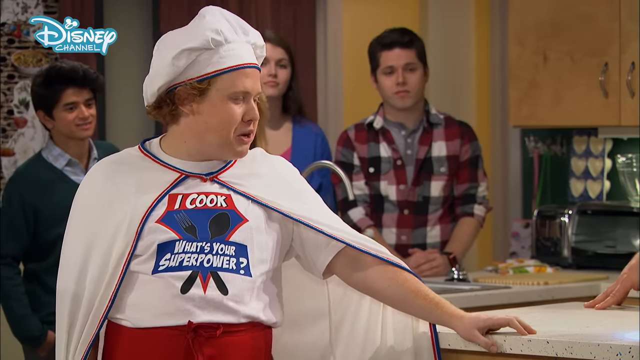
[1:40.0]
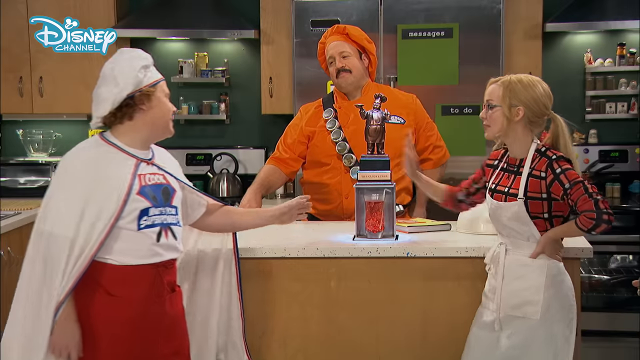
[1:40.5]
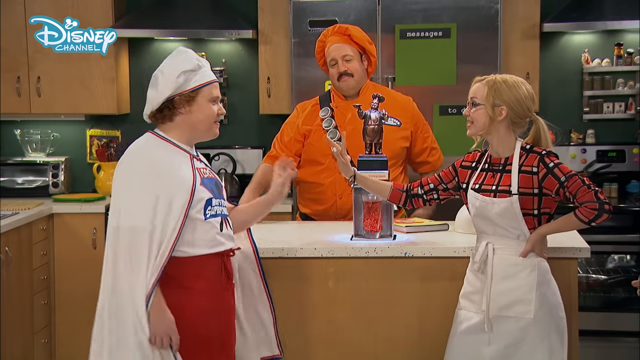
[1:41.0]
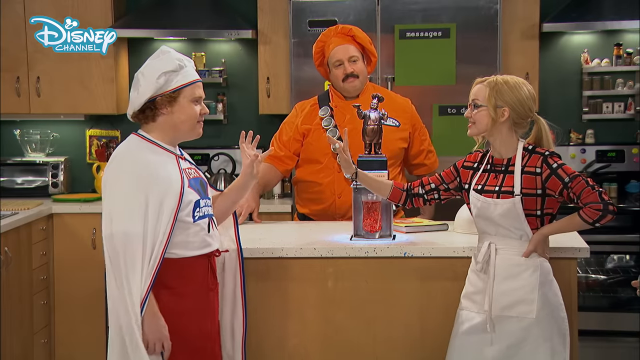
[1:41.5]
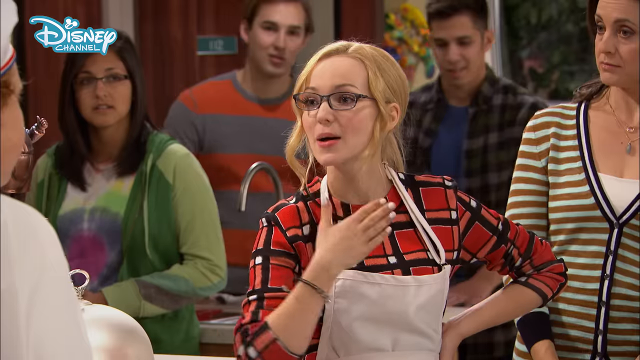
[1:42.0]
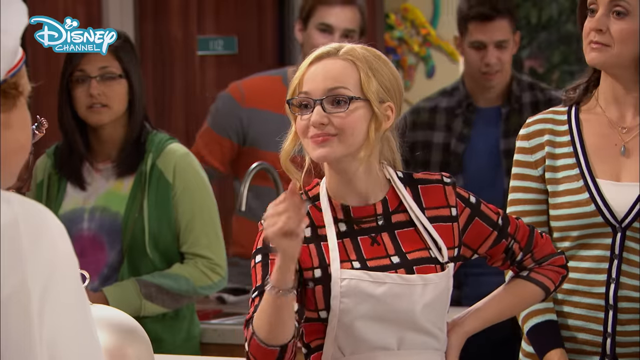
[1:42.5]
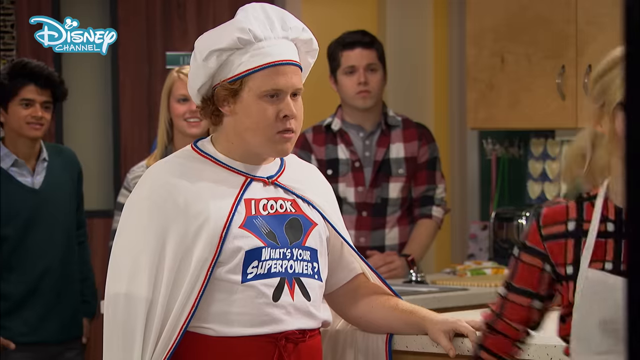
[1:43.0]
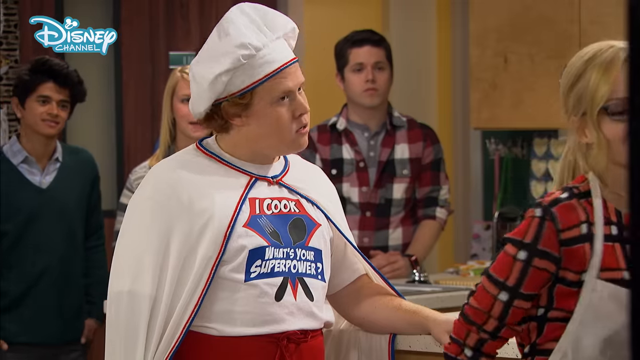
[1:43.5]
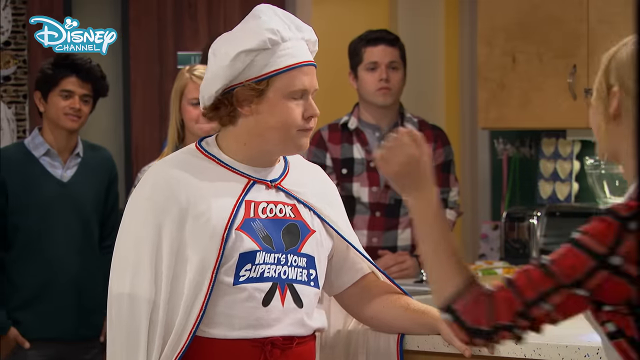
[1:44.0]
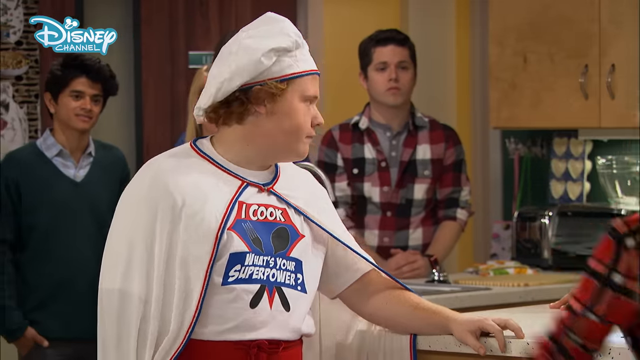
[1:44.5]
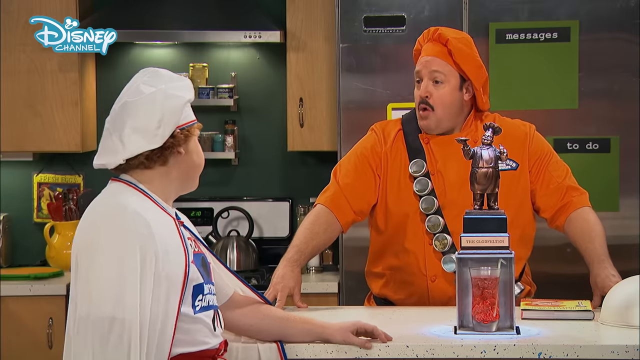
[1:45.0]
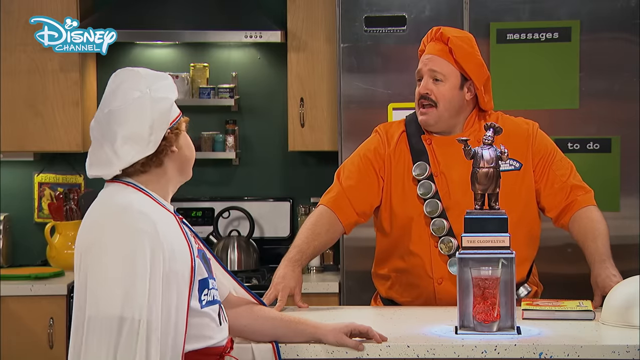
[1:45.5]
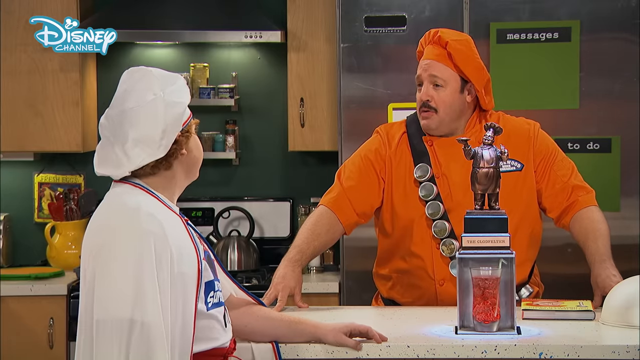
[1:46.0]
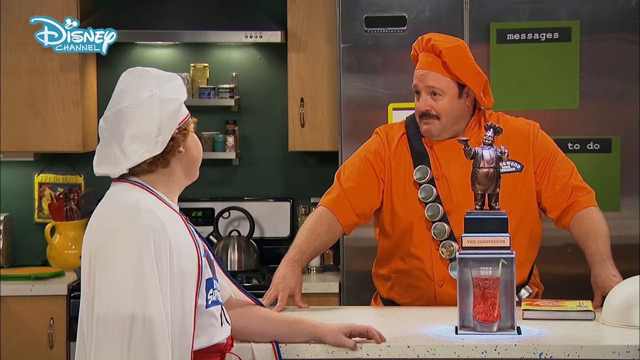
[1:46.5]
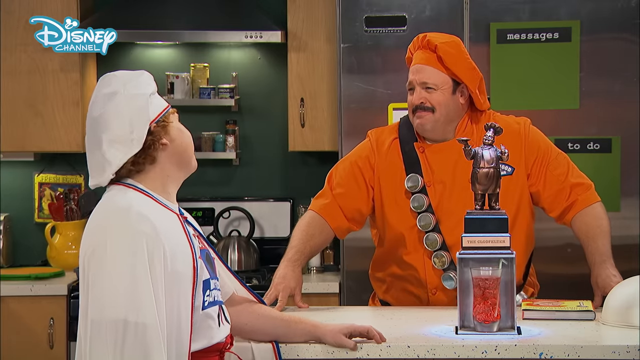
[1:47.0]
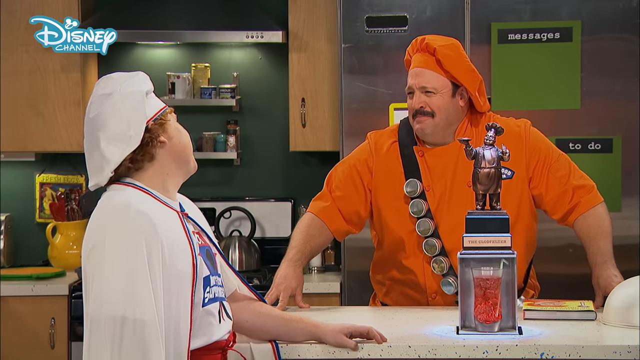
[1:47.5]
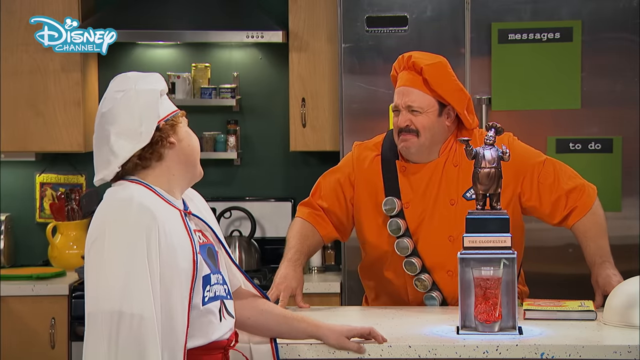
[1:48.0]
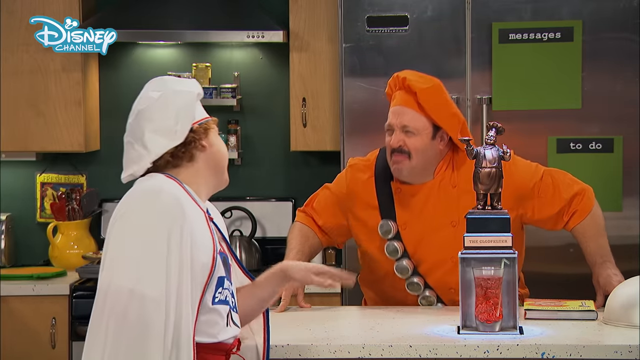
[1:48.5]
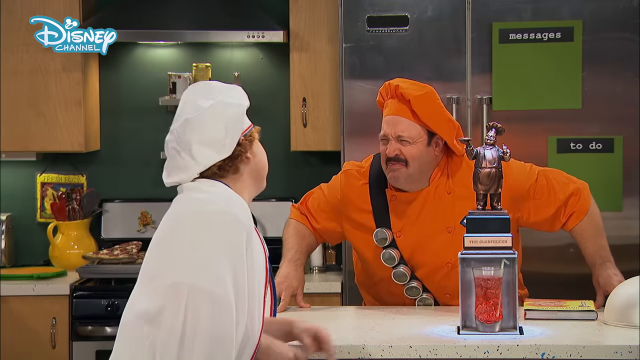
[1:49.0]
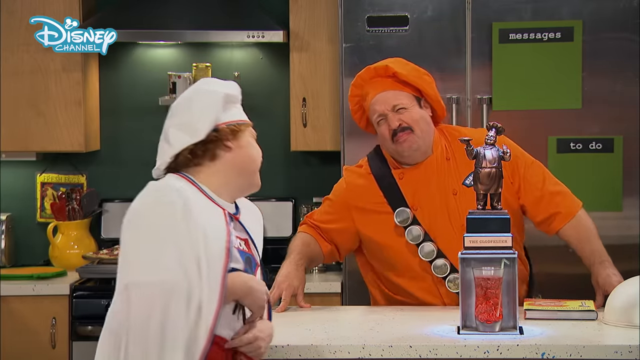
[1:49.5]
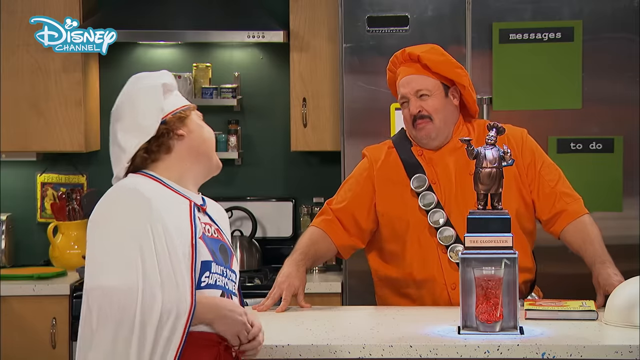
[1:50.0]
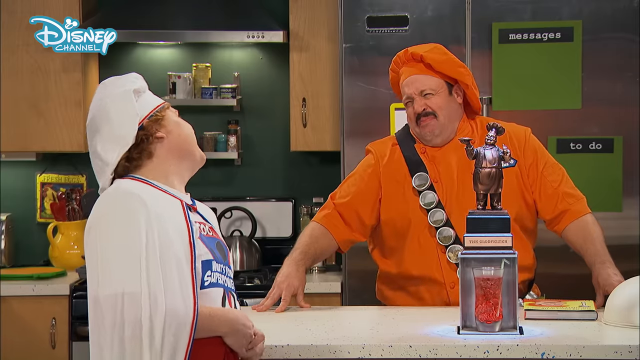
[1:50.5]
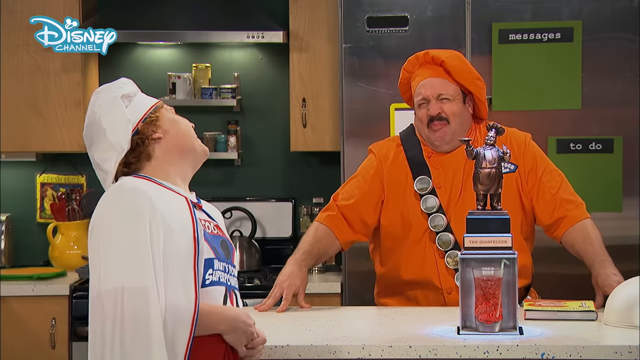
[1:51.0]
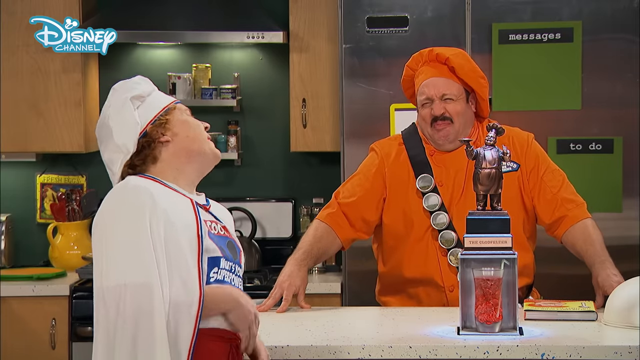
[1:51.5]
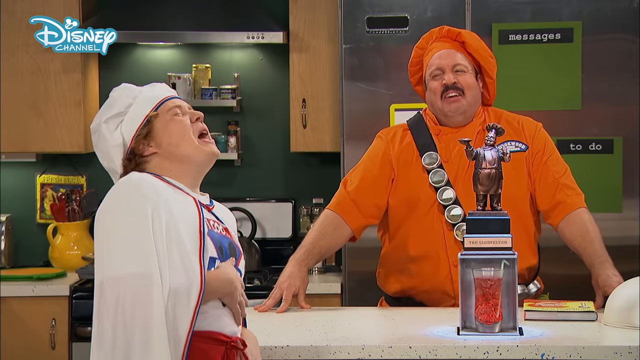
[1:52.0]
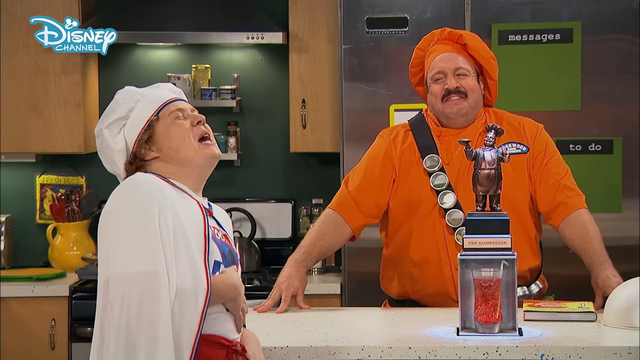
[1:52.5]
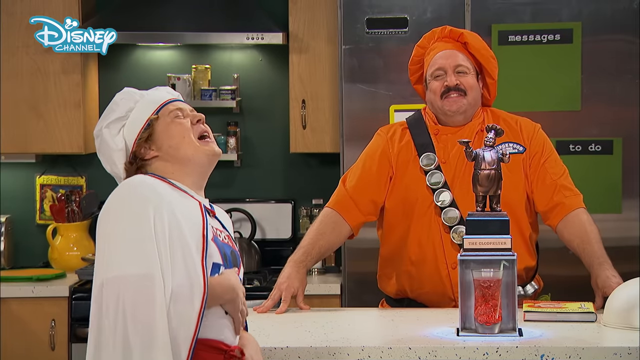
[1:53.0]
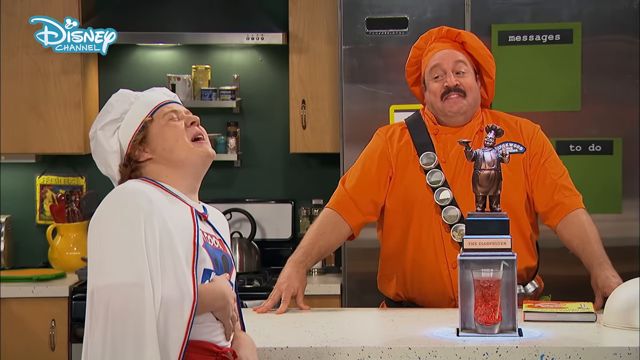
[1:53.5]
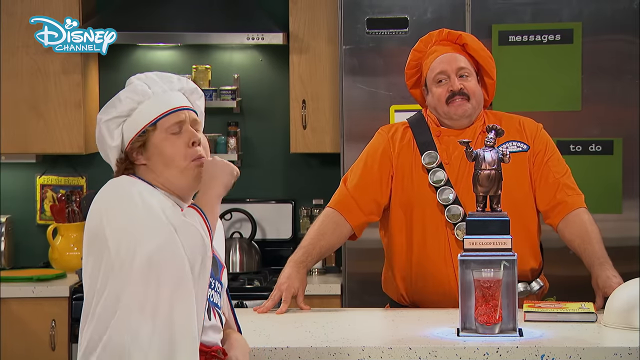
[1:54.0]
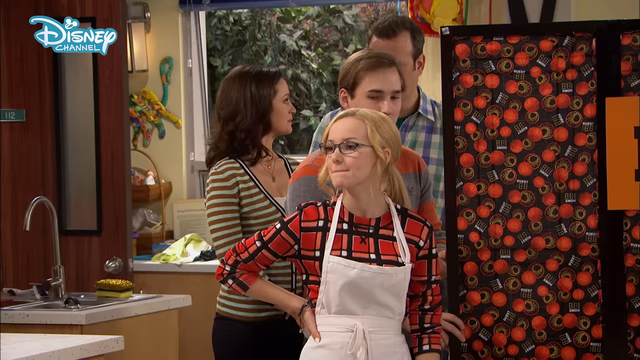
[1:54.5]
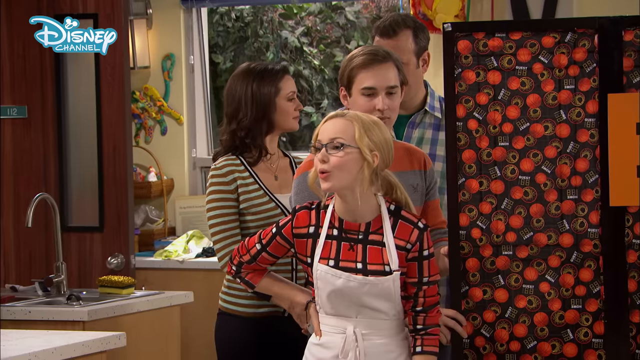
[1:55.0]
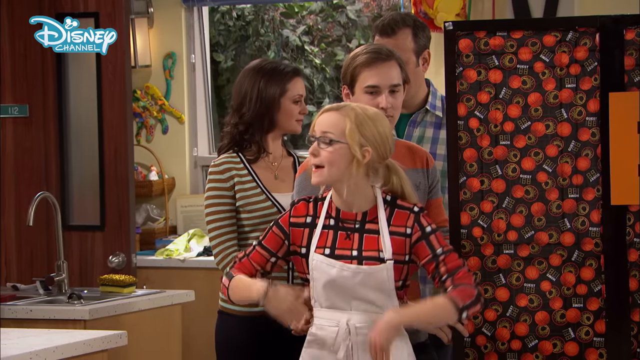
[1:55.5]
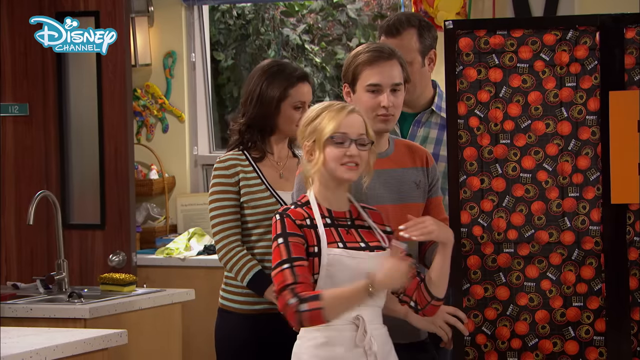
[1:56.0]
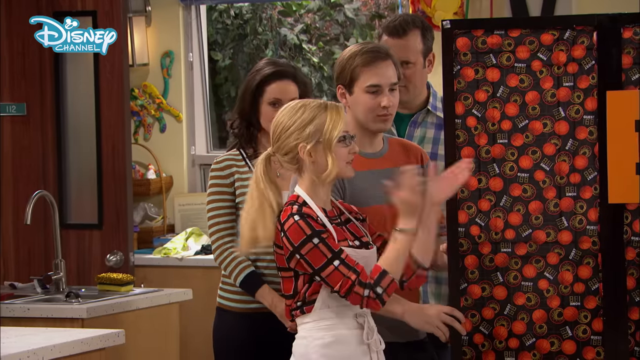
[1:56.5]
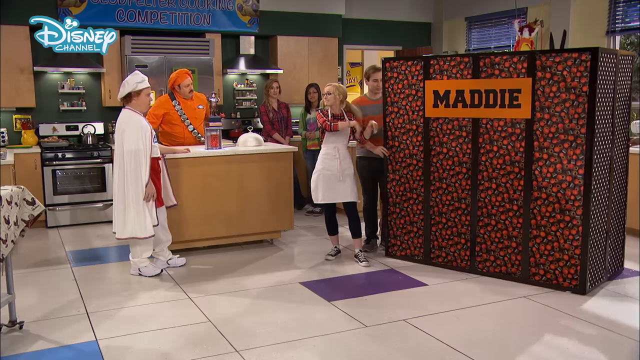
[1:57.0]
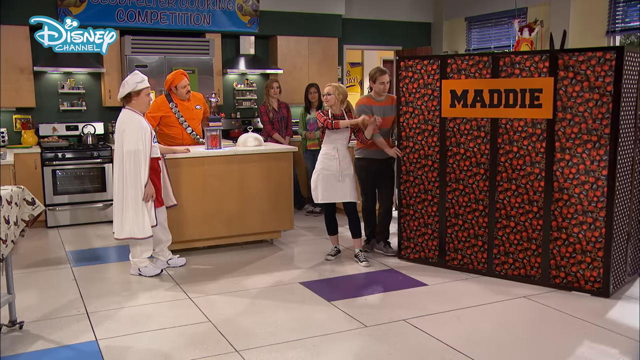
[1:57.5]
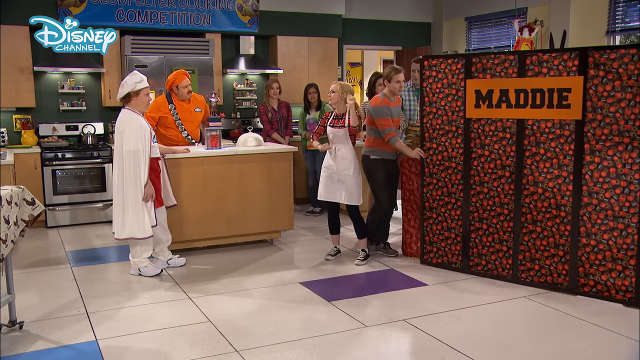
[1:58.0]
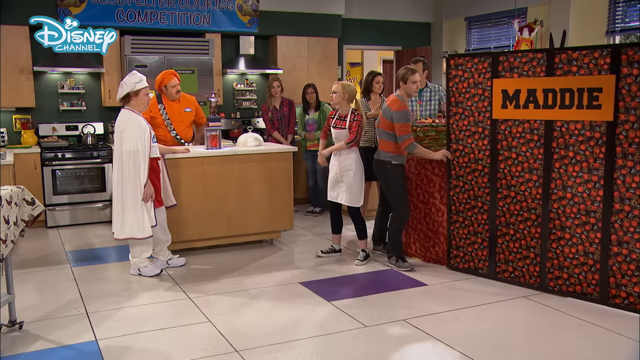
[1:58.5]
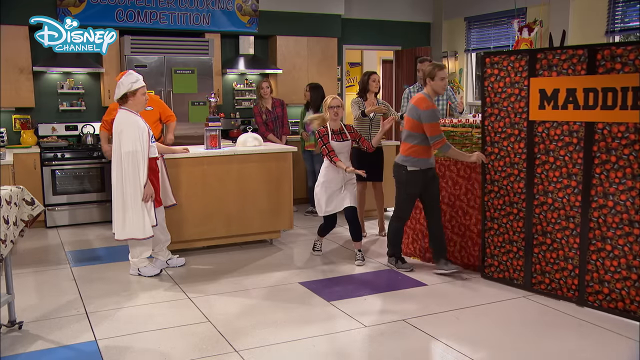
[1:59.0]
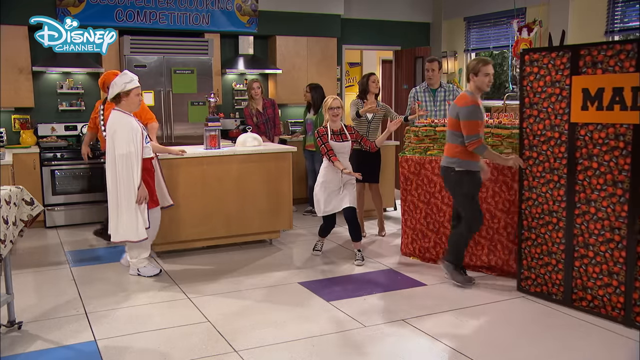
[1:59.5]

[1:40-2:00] The young man in the apron that says "I cook what's your superpower" talks to a girl standing by the table, and then he and the chef in the orange chef's outfit look at each other and pretend to cry. A girl named Maddie pushes away a screen with her name on it to show what she has behind it. Some other teenagers stand by the table without chef's hats or aprons, so they are apparently not taking part in the cooking contest. The boy in the white chef's outfit, with the white t-shirt that says "I cook what's your superpower", is apparently competing against Maddie. She has glasses and blonde hair and wears a red and black plaid t-shirt.